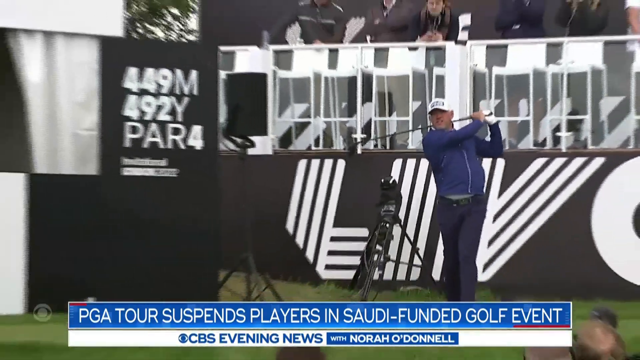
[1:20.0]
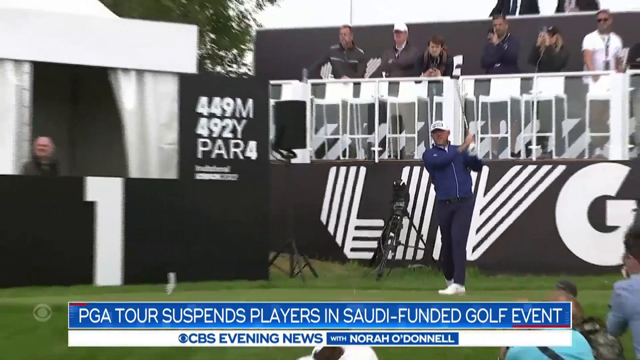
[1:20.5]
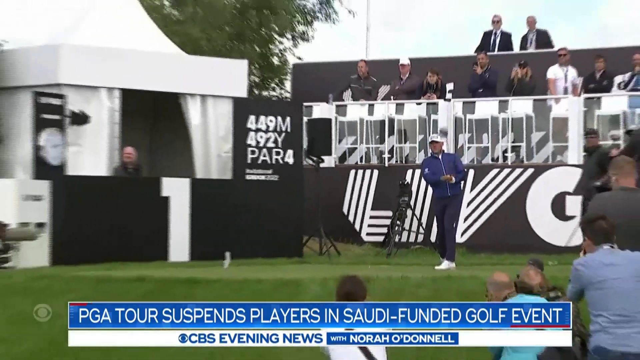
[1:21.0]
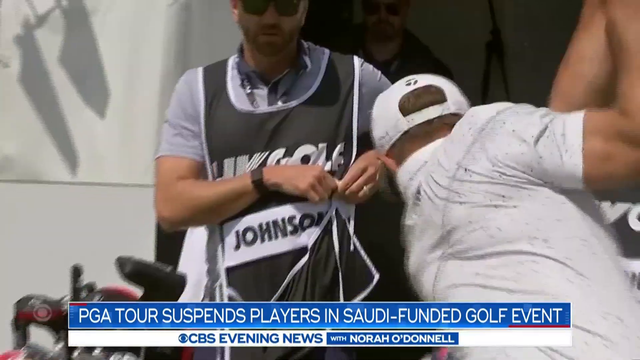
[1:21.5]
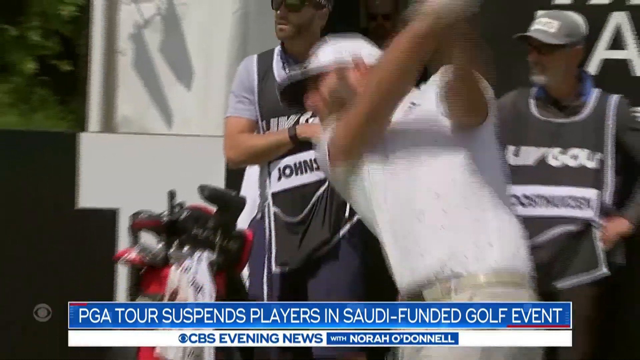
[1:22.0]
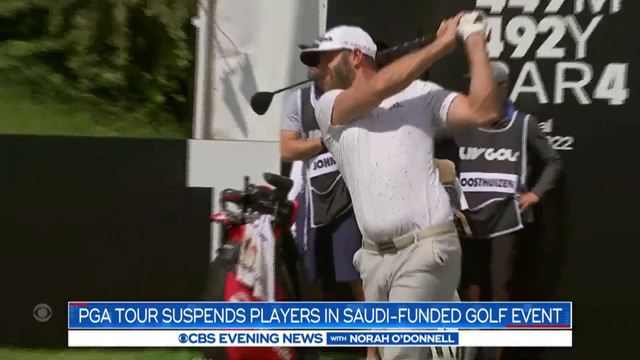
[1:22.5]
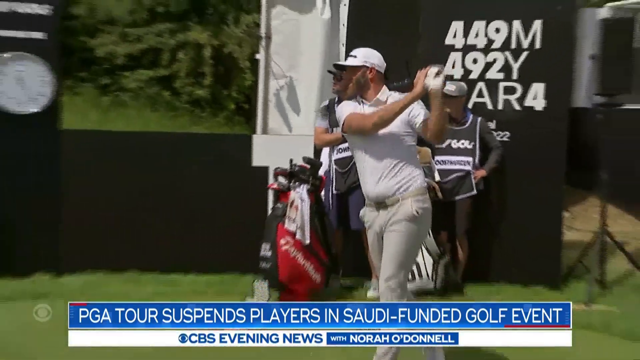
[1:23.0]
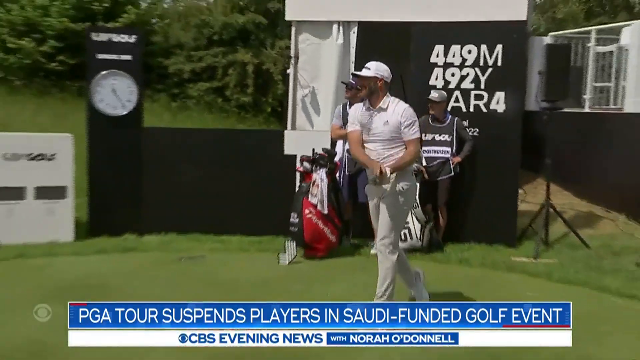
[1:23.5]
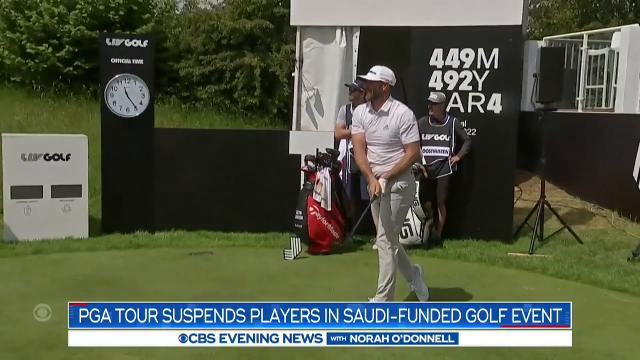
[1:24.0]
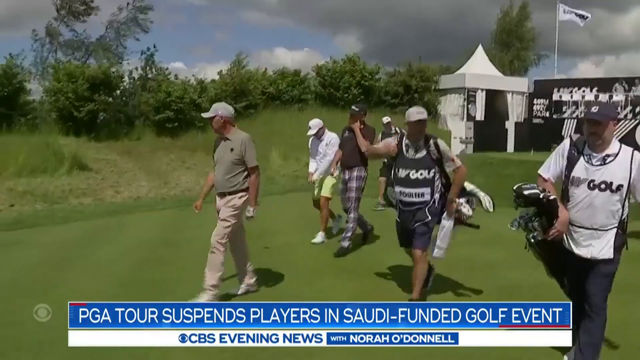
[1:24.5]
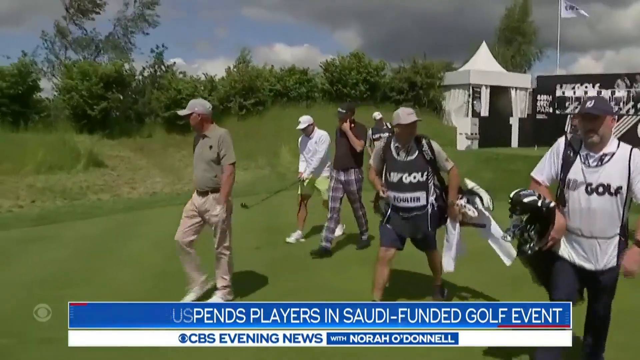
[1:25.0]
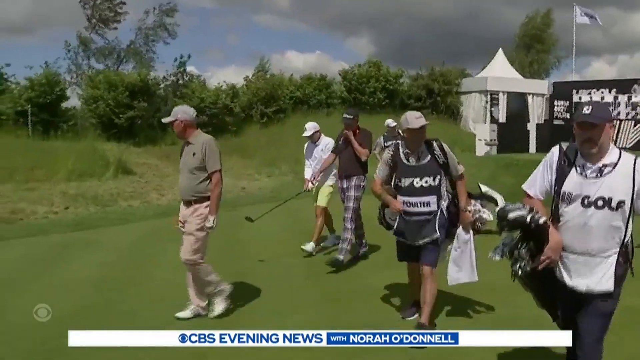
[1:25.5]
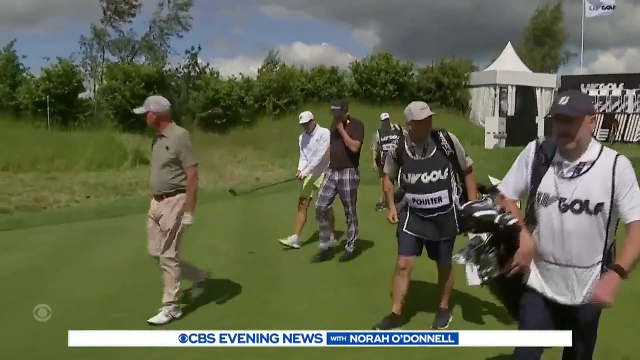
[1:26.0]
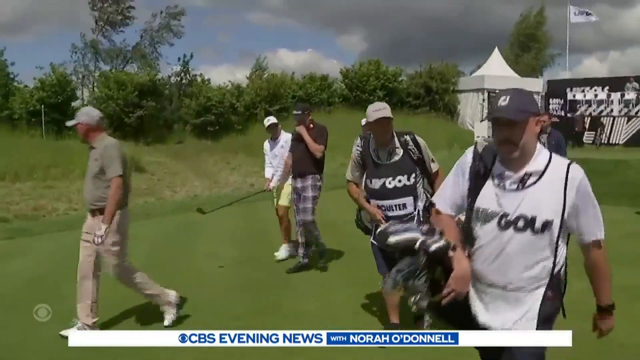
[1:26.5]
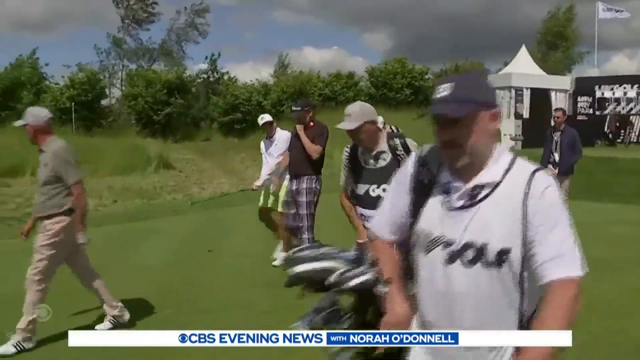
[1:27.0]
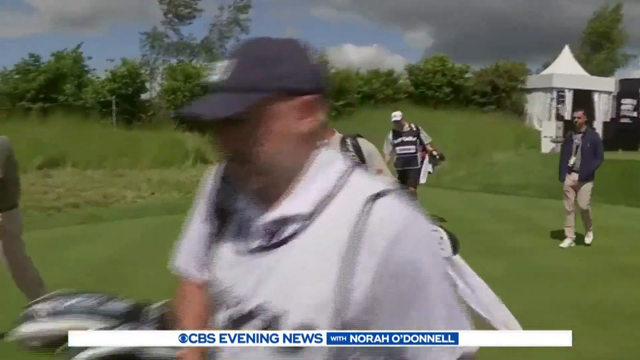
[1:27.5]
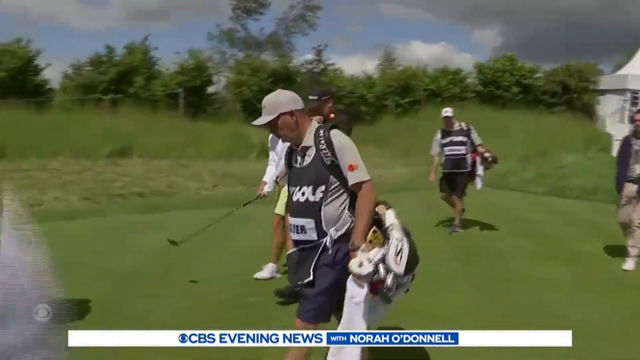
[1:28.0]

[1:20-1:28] The CBS Evening News with Nora O'Donnell story continues, with the channel label and the title bar along the bottom. The title bar has a blue background and white font reading "PGA TOUR SUSPENDS PLAYERS IN SAUDI FUNDED GOLF TOURNAMENT", and underneath, the channel information is displayed in blue font on a white background along with the CBS logo. Five or six golfers walk along the green, not clustered together but spread out and walking casually. None of the golfers seem to be the focus; it appears to be a generic clip of activities at a golf tournament.